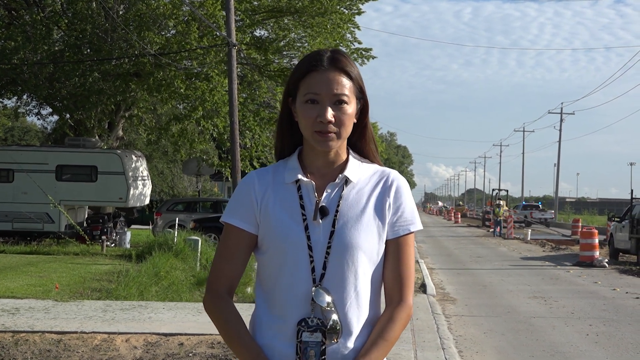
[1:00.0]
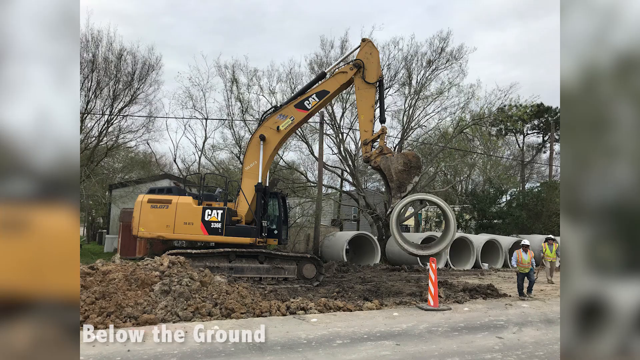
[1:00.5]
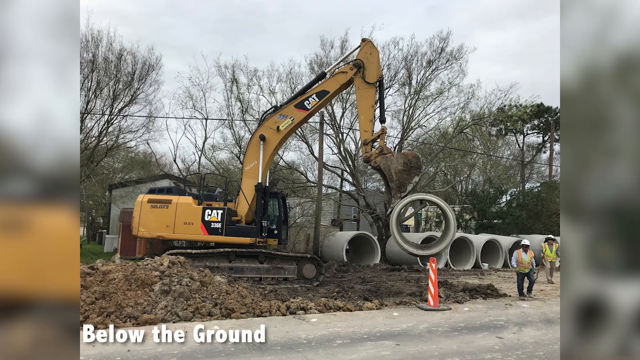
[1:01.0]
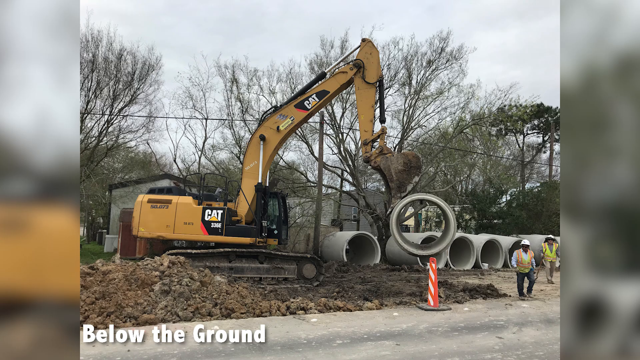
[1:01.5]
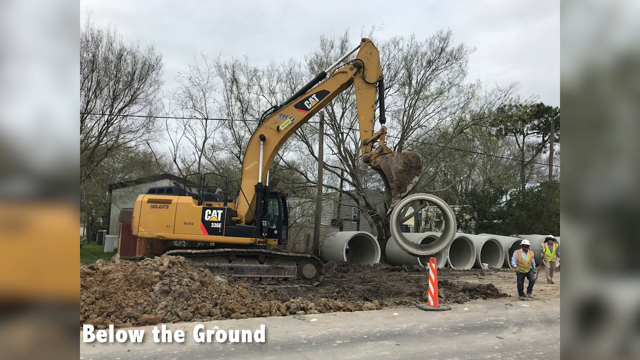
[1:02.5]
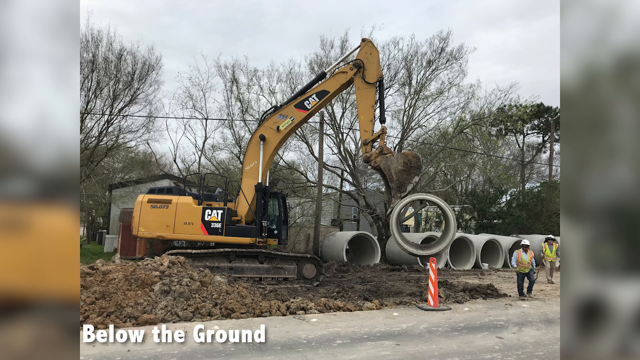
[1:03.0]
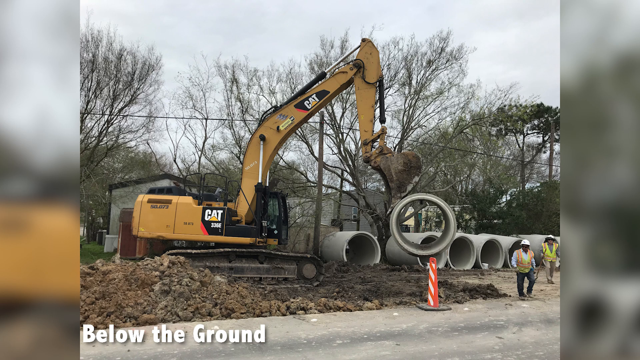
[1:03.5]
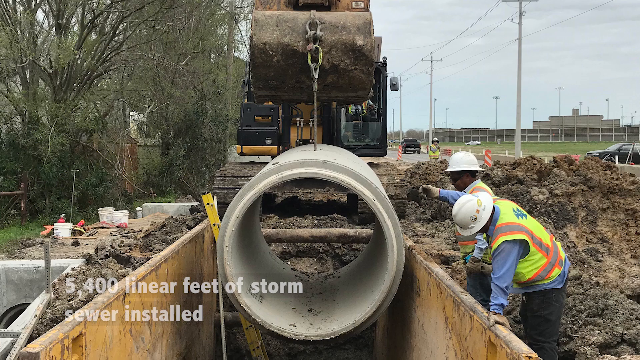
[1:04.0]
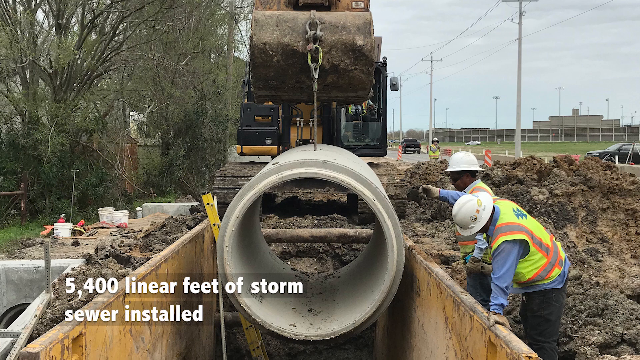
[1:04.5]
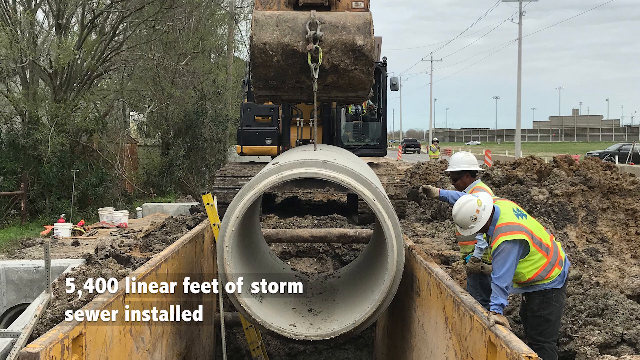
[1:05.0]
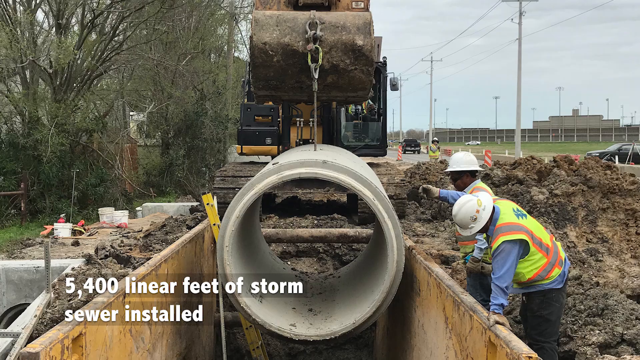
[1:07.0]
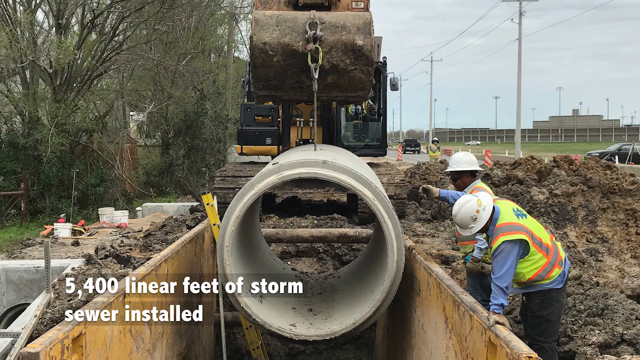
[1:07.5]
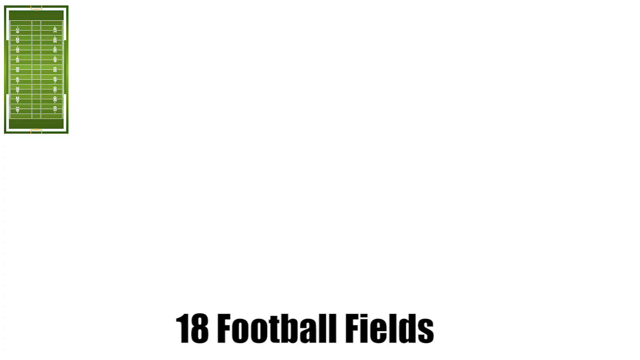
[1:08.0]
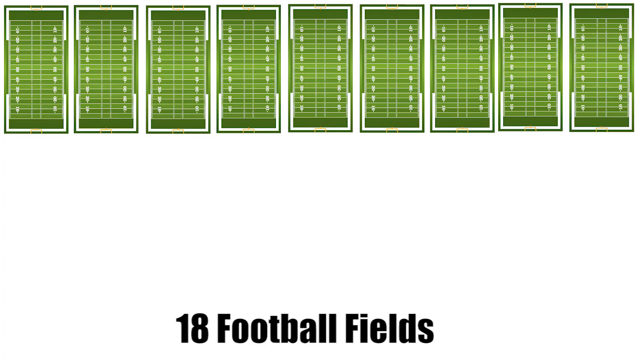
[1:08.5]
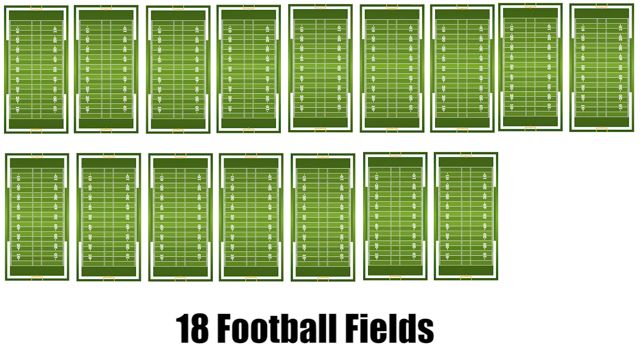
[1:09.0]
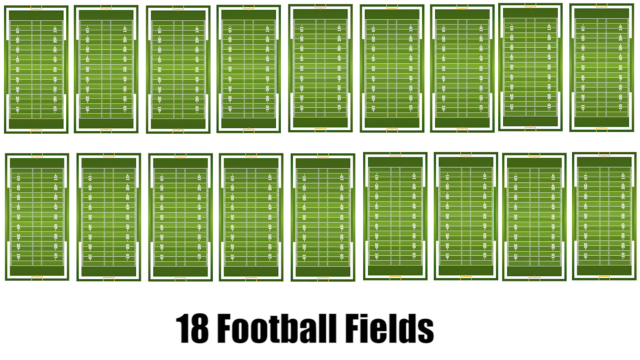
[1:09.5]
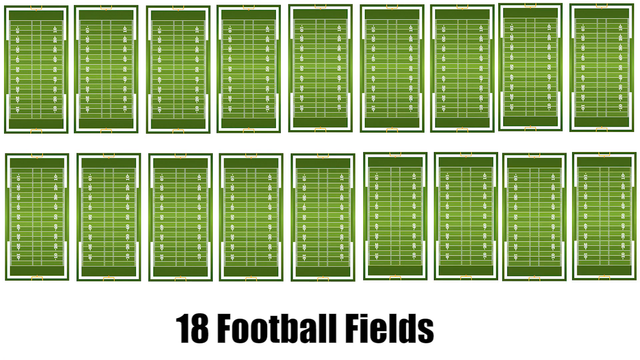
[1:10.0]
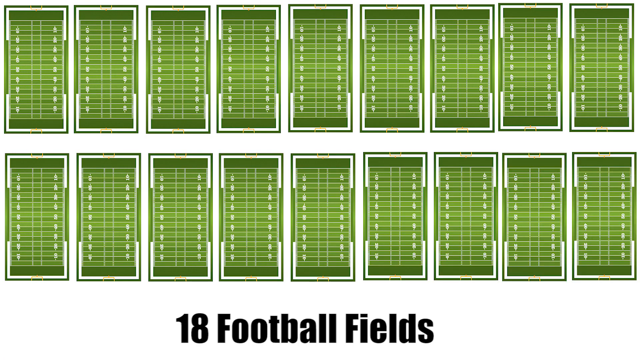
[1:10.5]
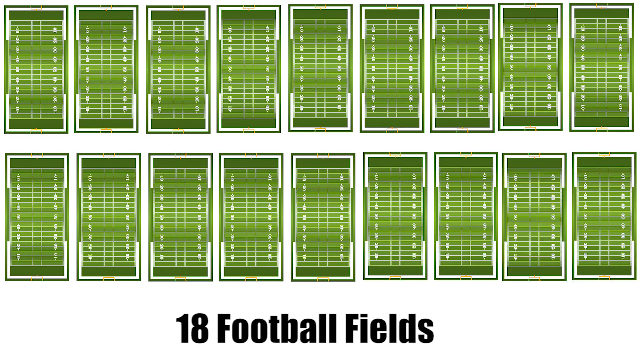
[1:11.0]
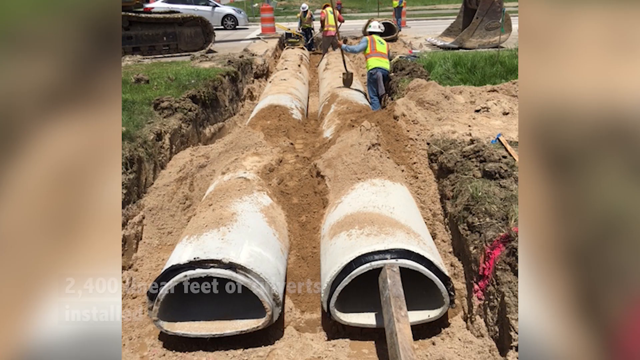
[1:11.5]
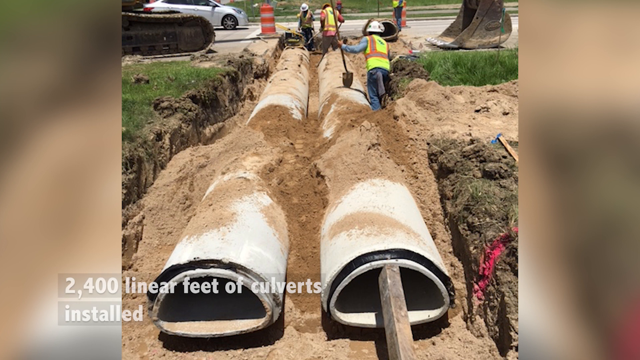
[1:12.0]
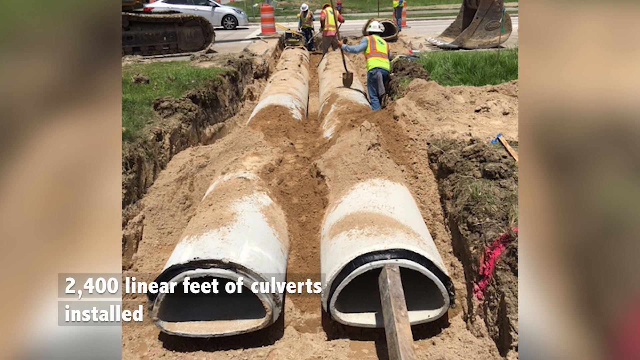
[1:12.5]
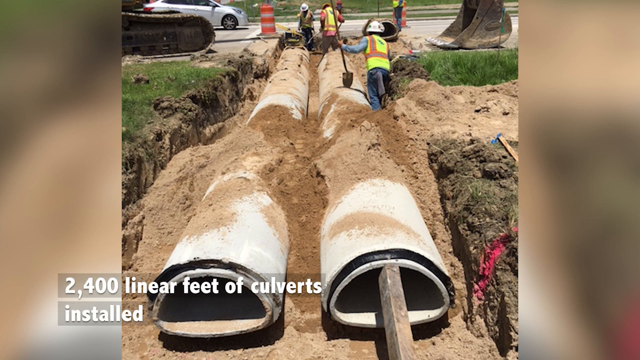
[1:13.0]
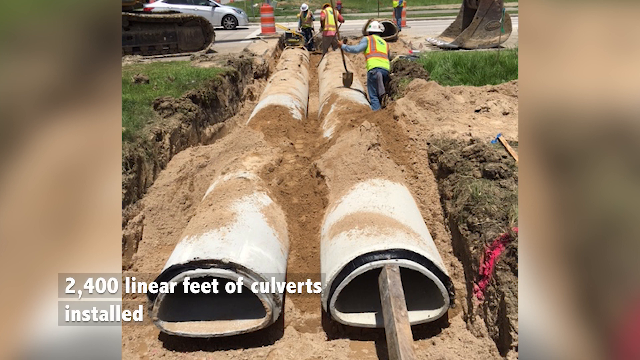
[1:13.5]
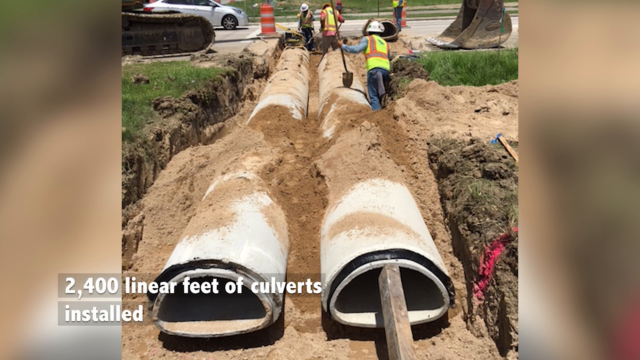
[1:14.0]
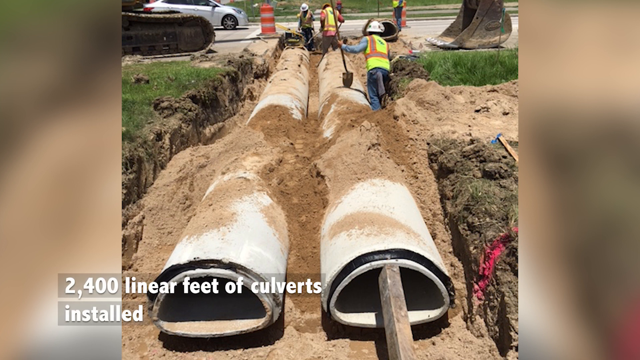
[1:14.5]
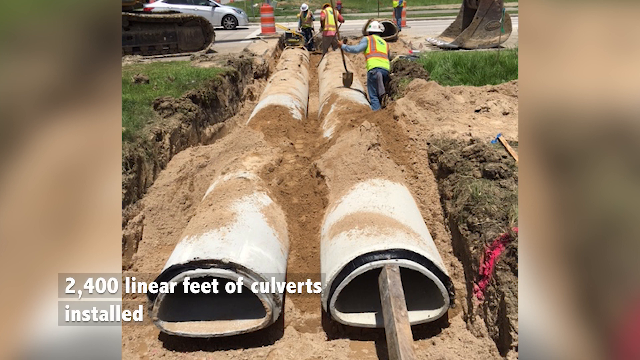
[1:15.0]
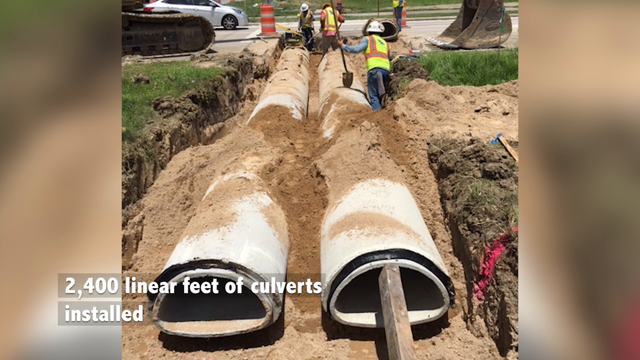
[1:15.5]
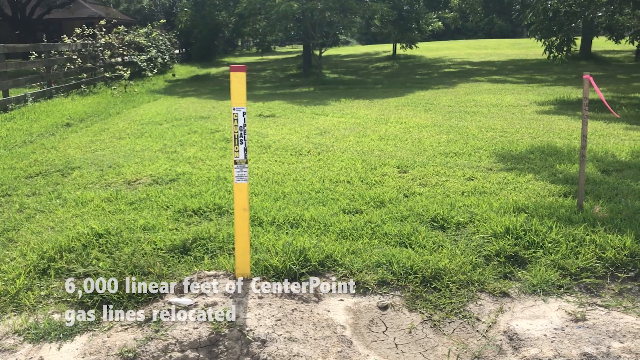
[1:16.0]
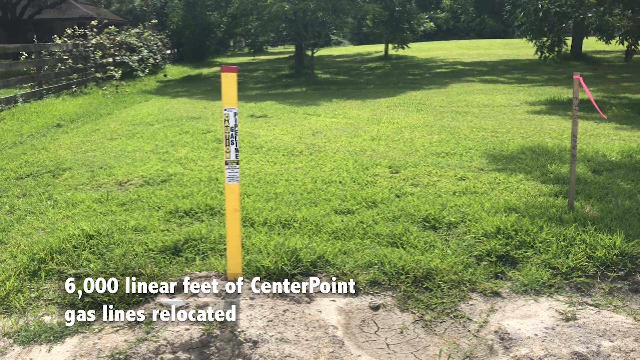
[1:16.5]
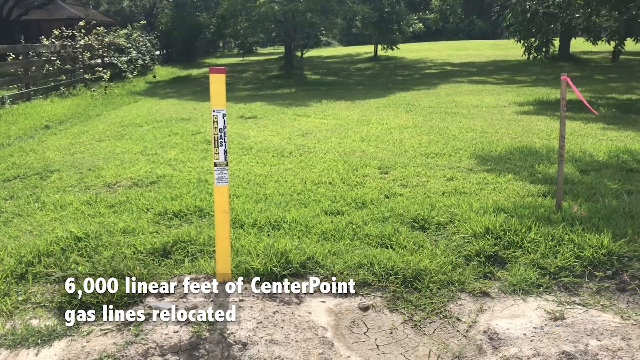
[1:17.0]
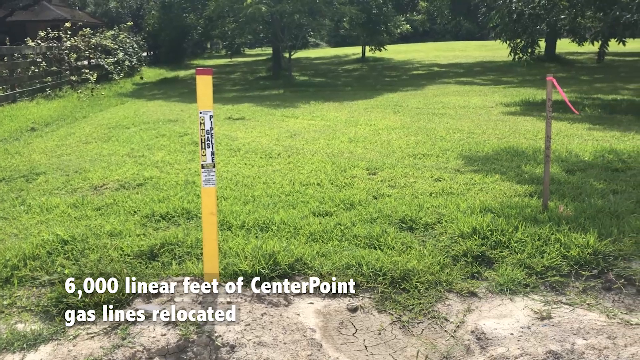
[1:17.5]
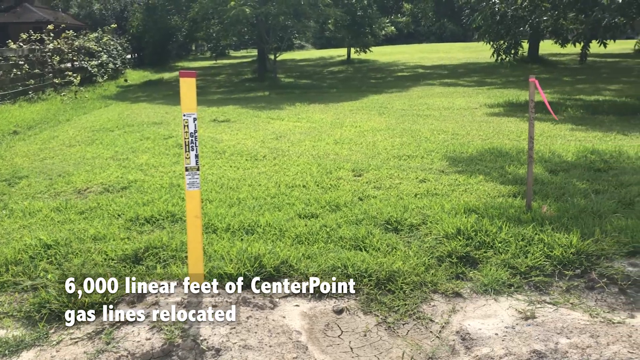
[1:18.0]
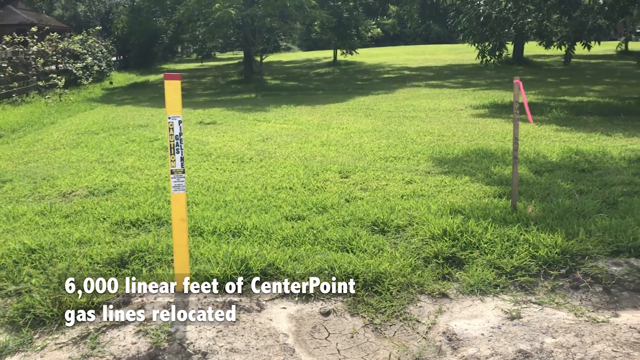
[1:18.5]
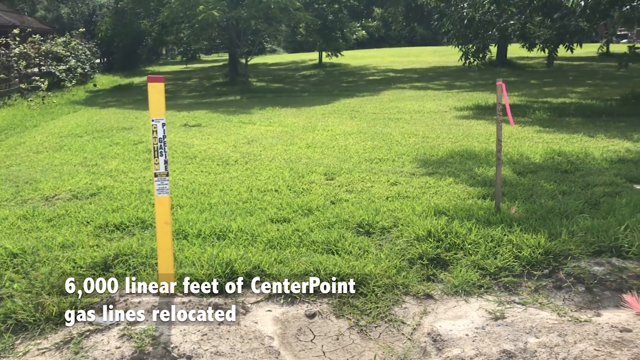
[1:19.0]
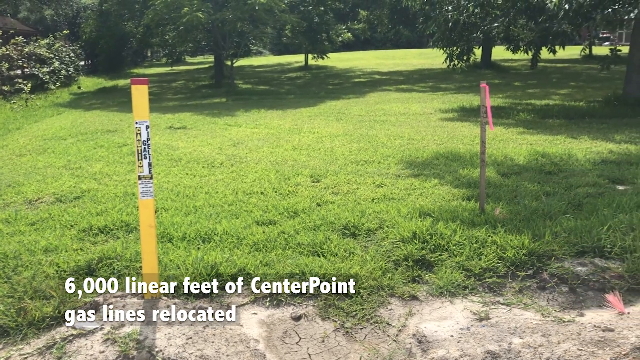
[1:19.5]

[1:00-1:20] A large Cat backhoe picks up one of the culverts, with a couple of construction workers in hard hats on the right side. It is sitting on a mound of dirt, and the trees right behind it, next to some houses, have no leaves. From the front of the backhoe, an attachment, some type of pulley, is lifting or holding up the culvert, which has some type of boards on each side, as the construction workers guide it in. A caption is on the lower left side. The screen then shows 18 identical images diagrammed like a football field, with a caption at the bottom saying "18 football fields". Next is one end of two culverts installed in the ground, with construction workers on the other half, one holding a shovel. Dirt is over the tops of them and down the side, there appears to be a black seal around the front, and the right culvert has some type of metal bar. A caption is in the lower left-hand corner. Then a yard appears with a yellow stick in the ground bearing some type of label and another wooden stick with an orange flag, and the video pans over a residential yard.